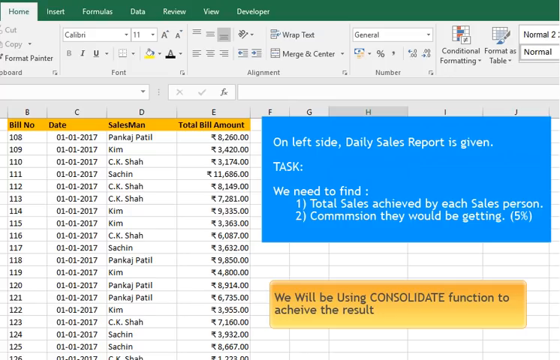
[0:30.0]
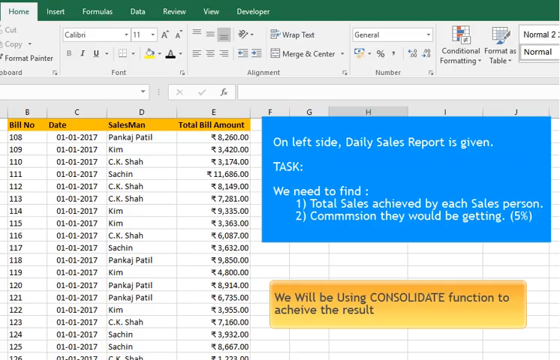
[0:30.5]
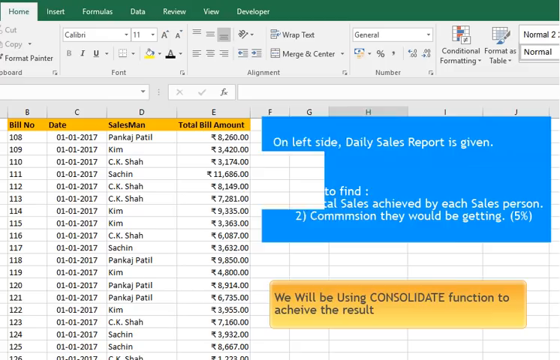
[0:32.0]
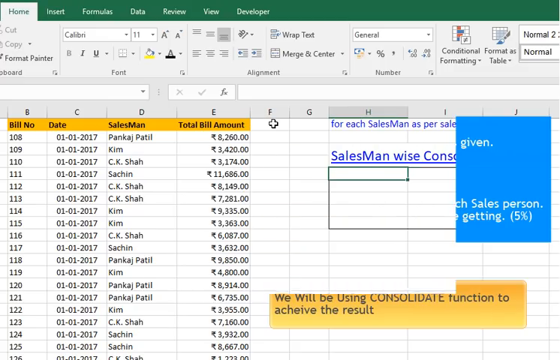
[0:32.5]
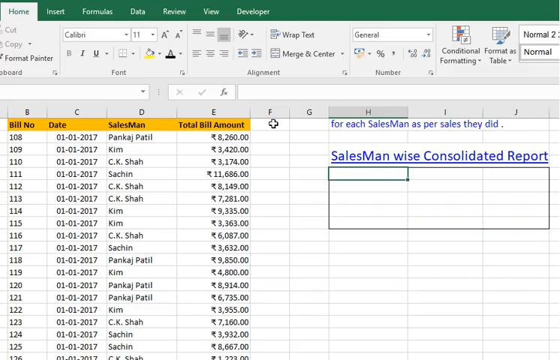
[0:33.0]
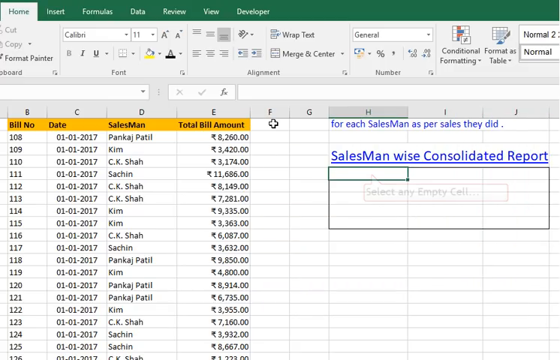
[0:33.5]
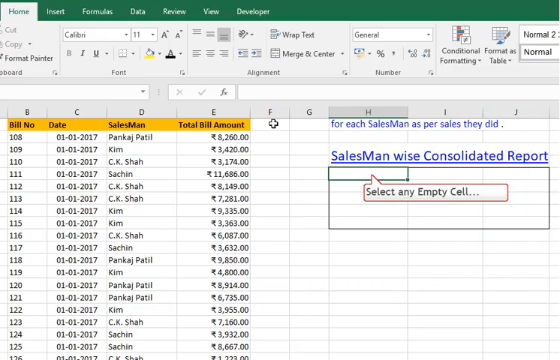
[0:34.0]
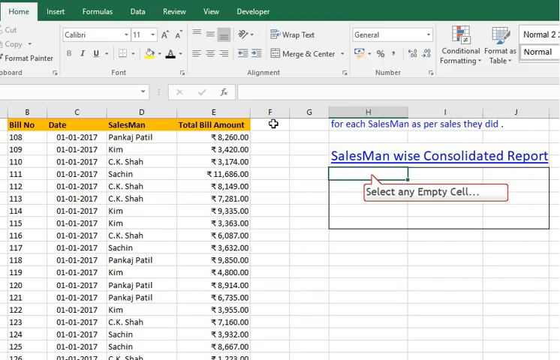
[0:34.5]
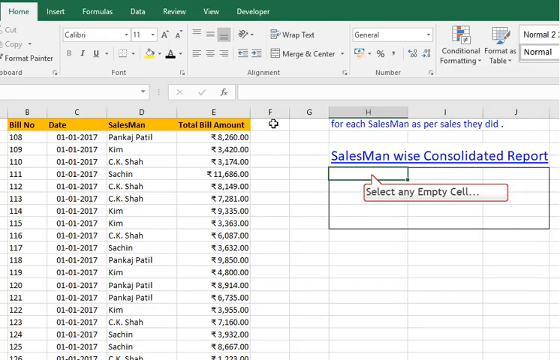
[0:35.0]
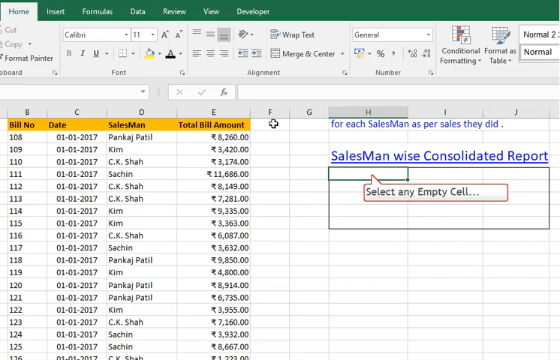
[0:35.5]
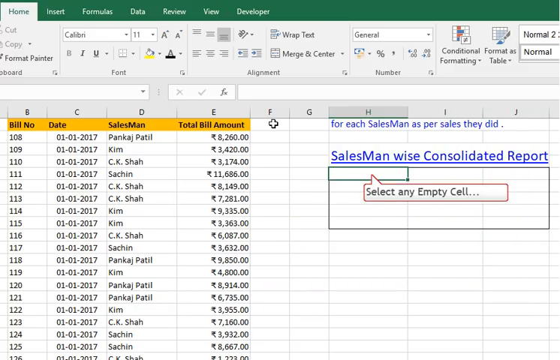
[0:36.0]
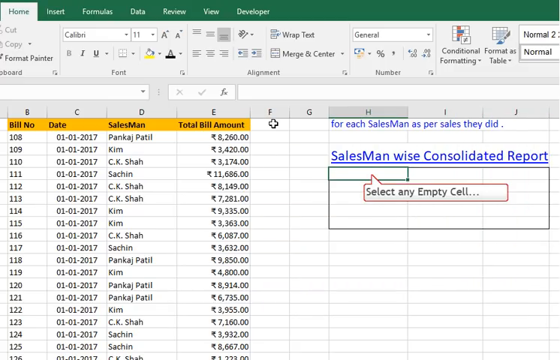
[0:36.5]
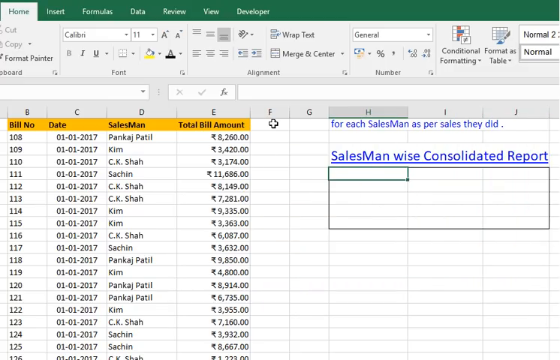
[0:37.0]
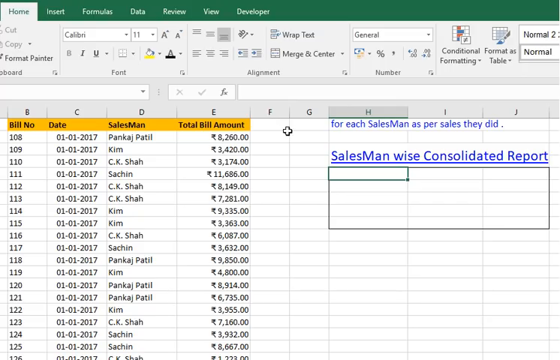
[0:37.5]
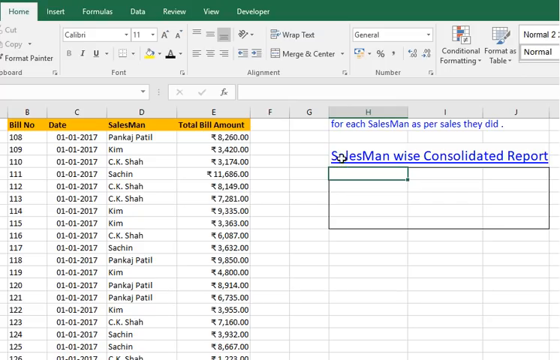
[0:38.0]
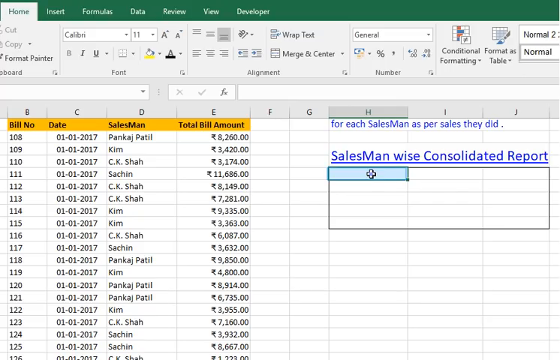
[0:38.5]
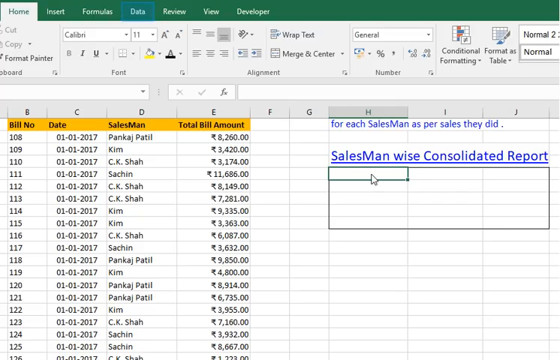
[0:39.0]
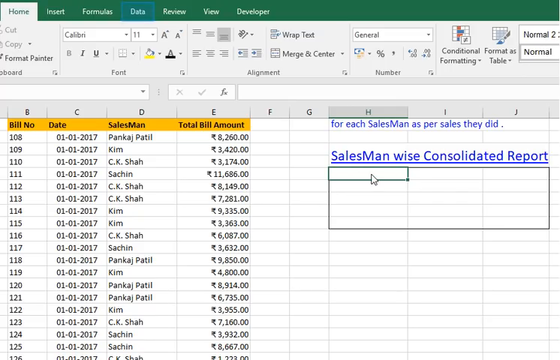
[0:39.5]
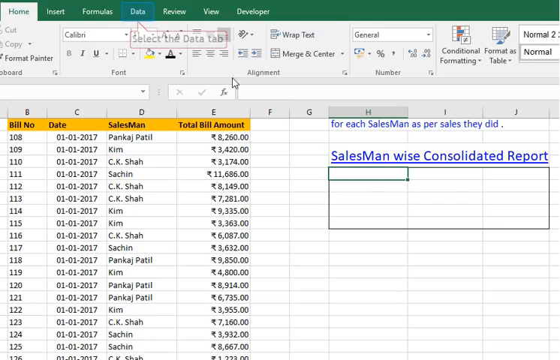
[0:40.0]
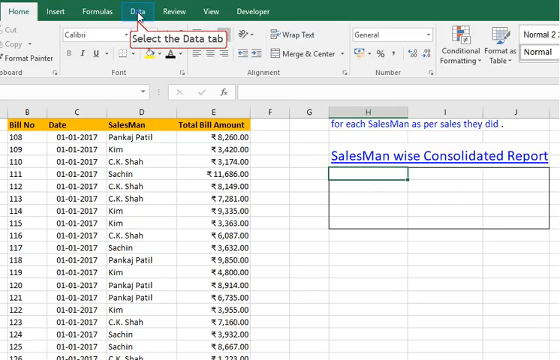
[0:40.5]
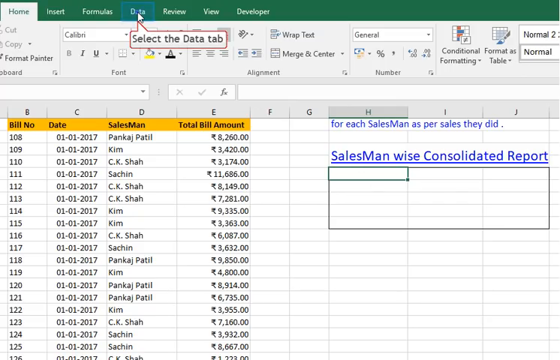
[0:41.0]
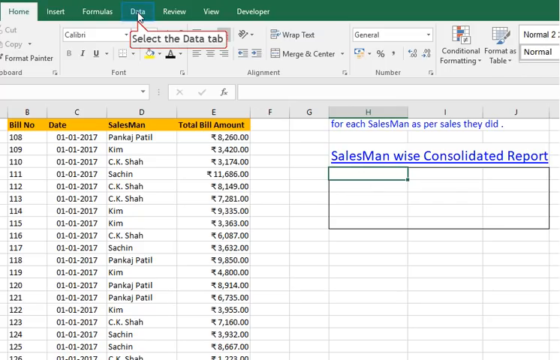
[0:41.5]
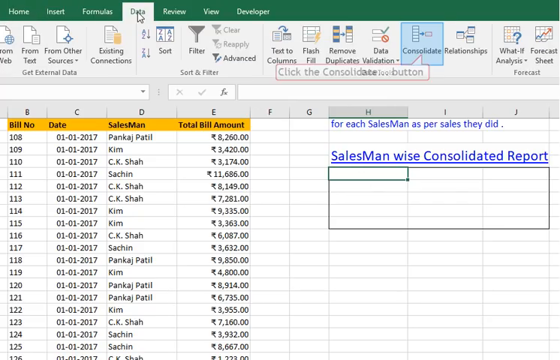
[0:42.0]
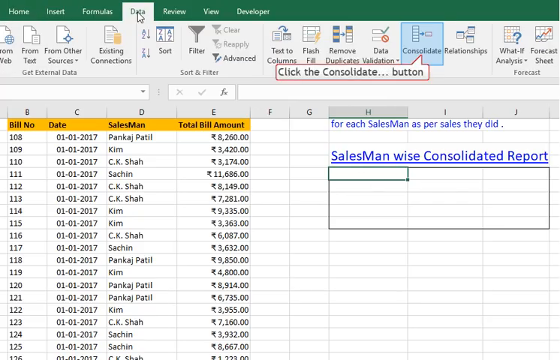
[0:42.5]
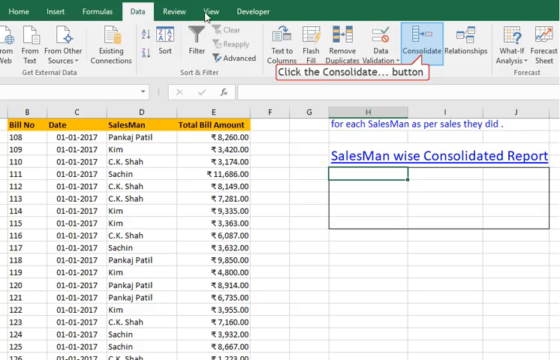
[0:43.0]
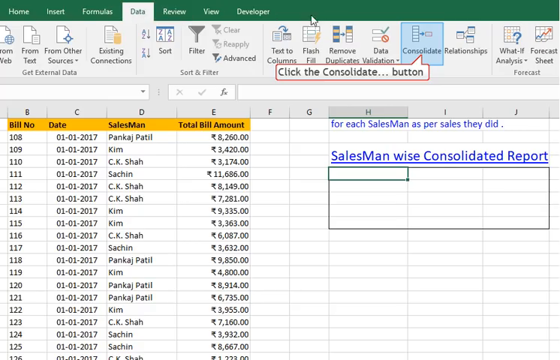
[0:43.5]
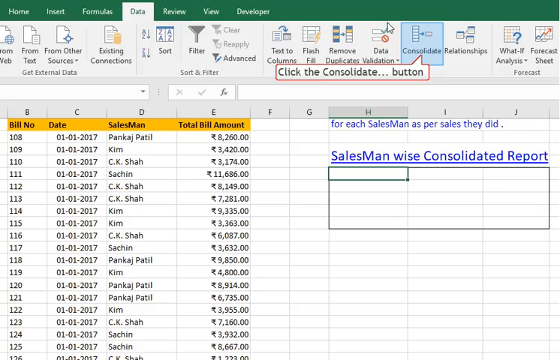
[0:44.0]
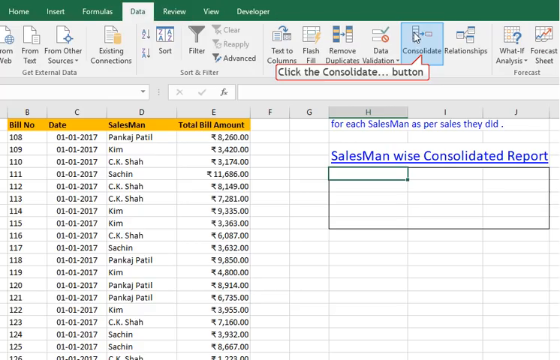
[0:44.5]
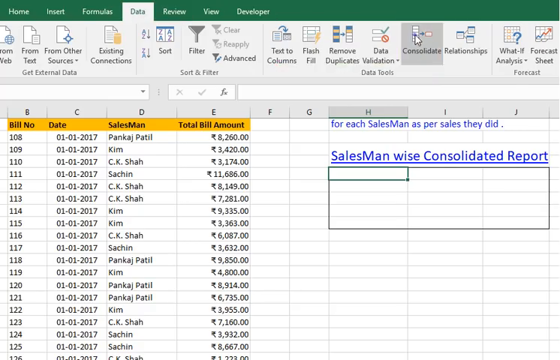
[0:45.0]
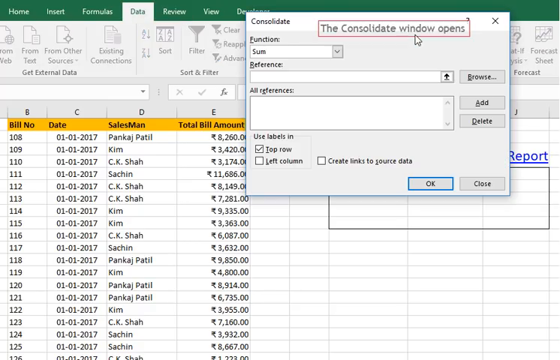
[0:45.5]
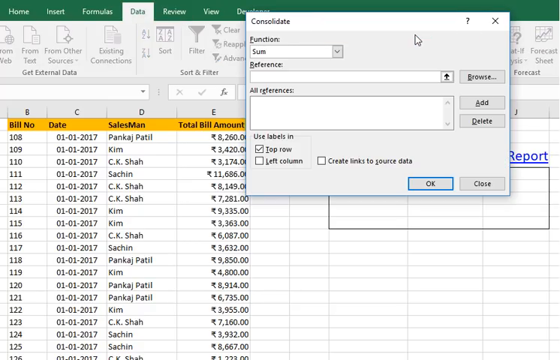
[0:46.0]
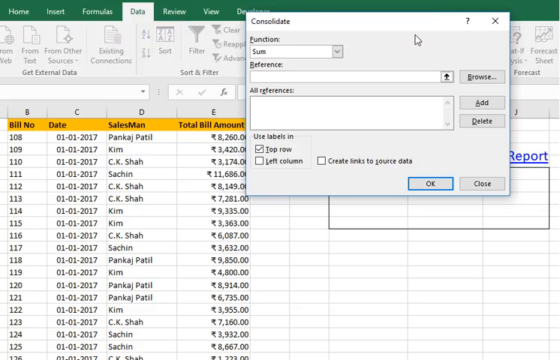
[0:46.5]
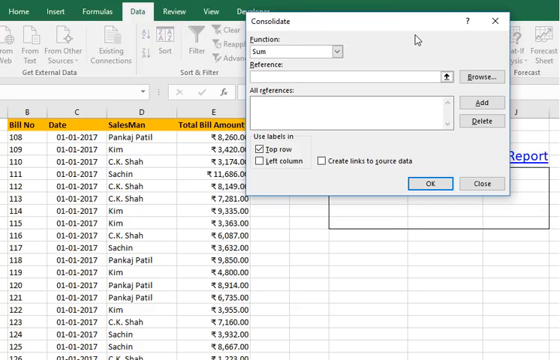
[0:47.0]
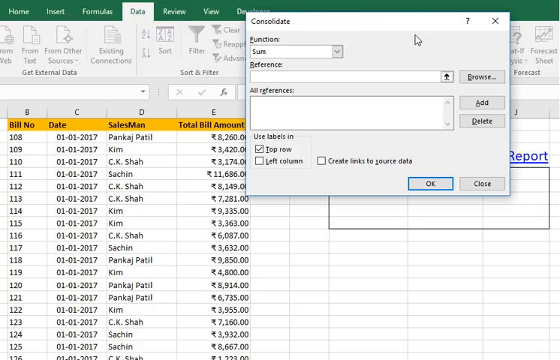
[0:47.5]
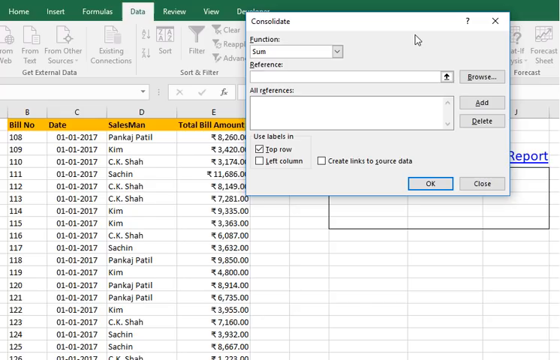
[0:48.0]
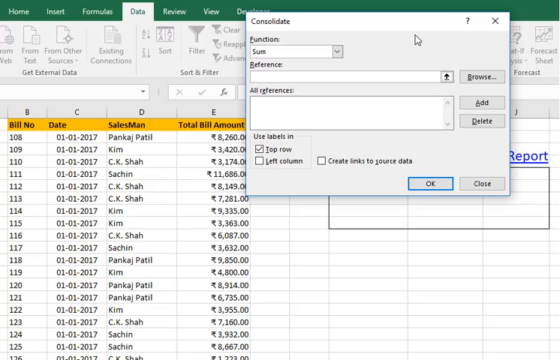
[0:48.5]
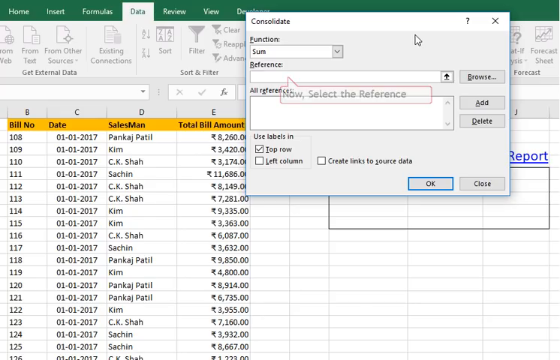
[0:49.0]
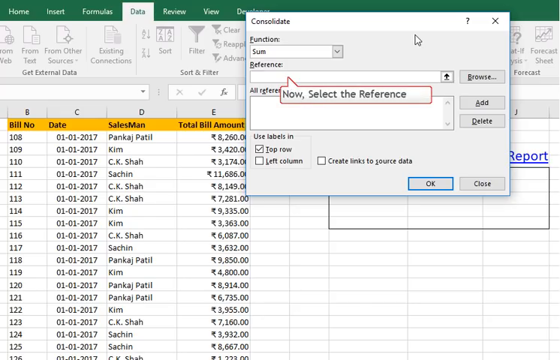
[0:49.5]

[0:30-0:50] Some steps are shown for getting the information needed to fill in a blank form, "salesman wise consolidated." Nothing changes; the setting stays the same, and the text on the screen is readable.